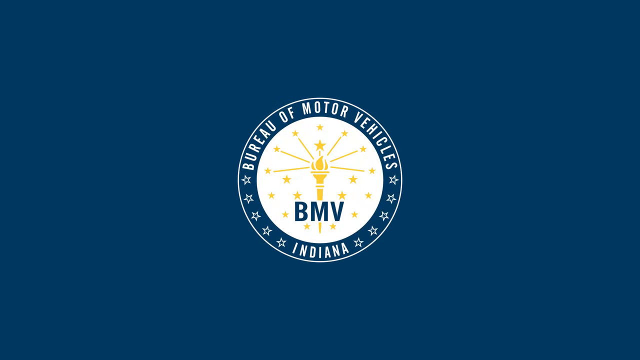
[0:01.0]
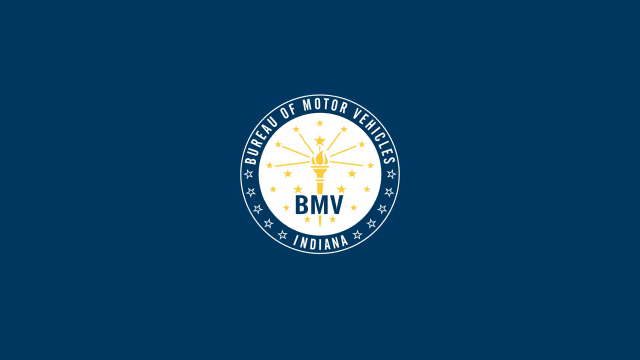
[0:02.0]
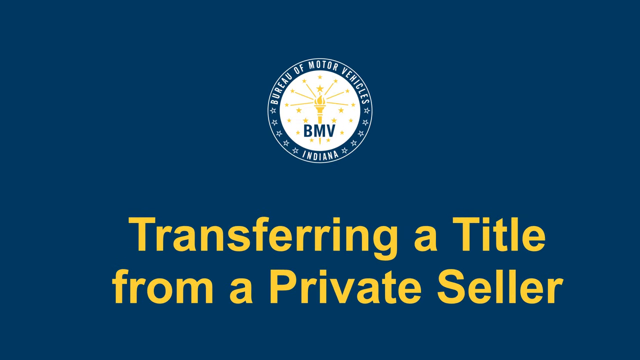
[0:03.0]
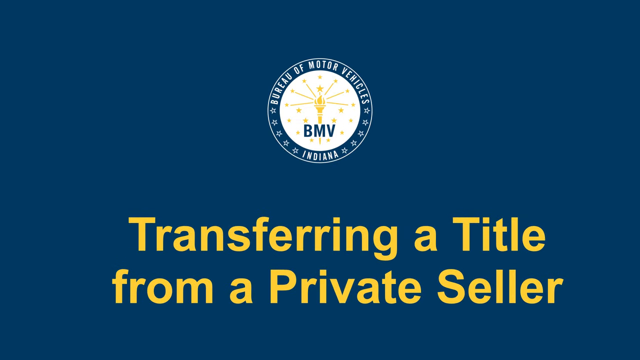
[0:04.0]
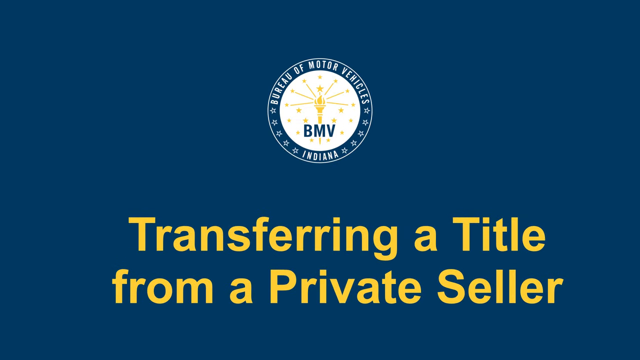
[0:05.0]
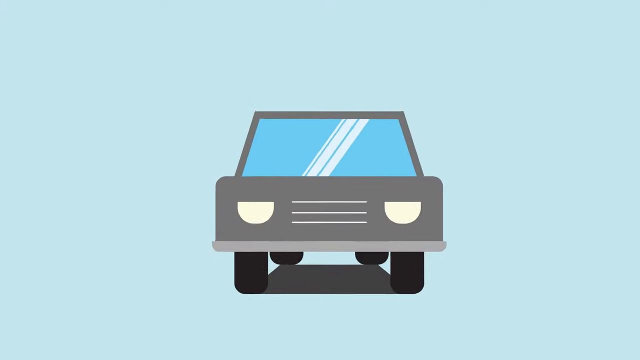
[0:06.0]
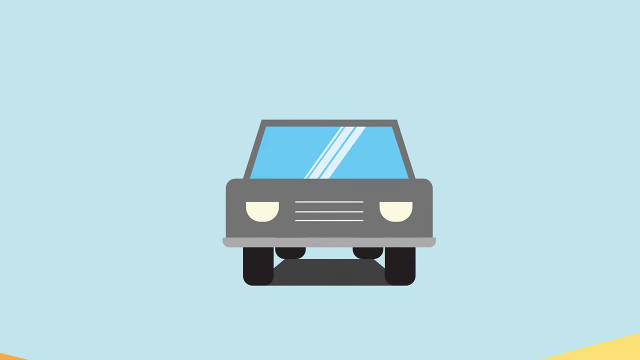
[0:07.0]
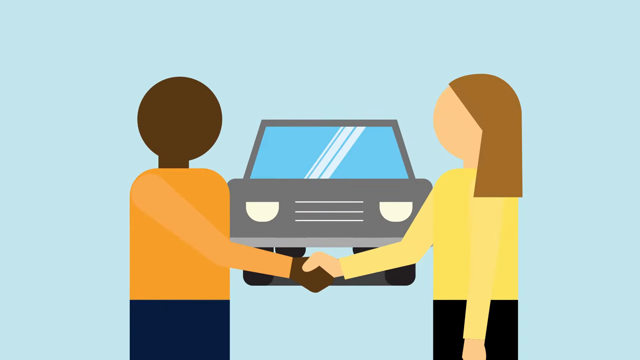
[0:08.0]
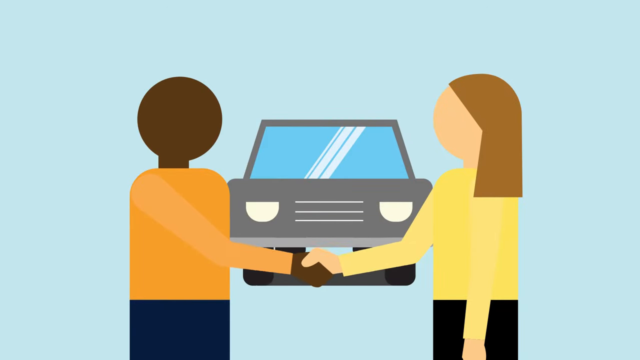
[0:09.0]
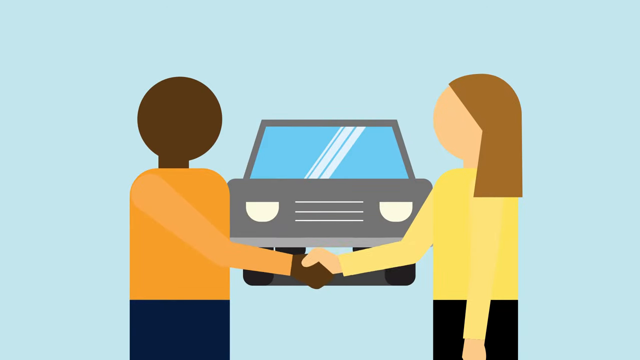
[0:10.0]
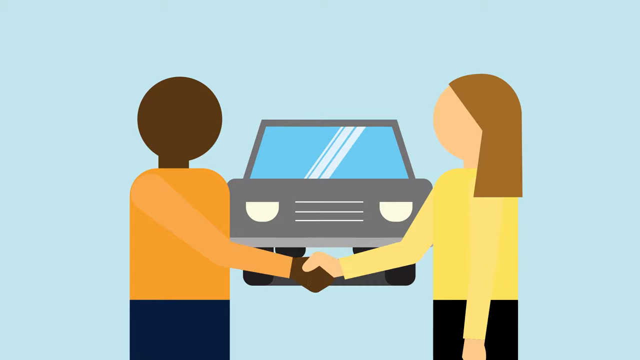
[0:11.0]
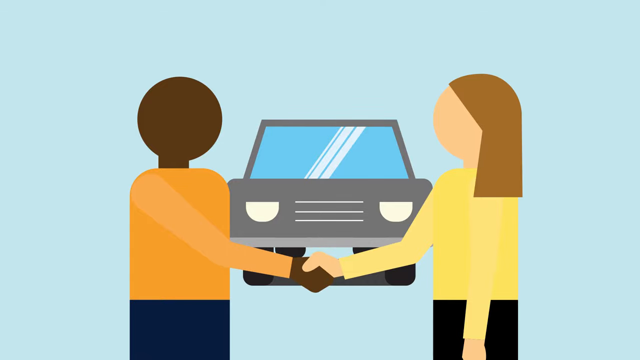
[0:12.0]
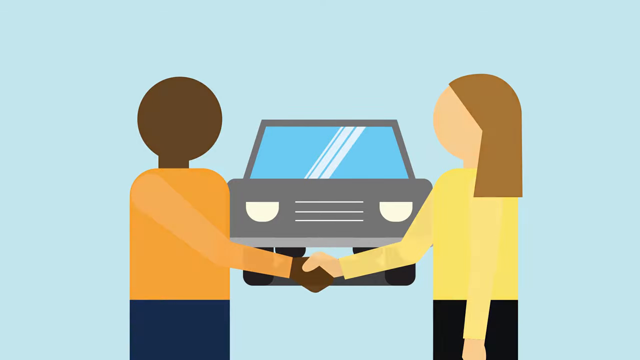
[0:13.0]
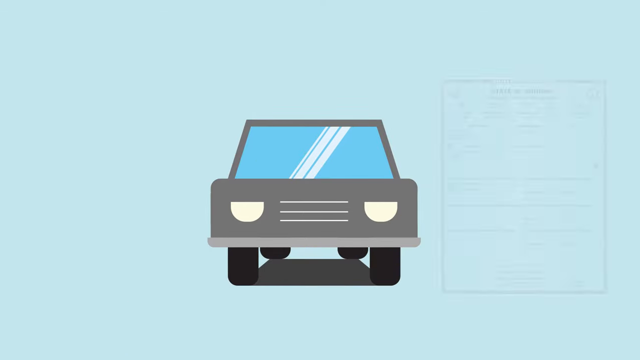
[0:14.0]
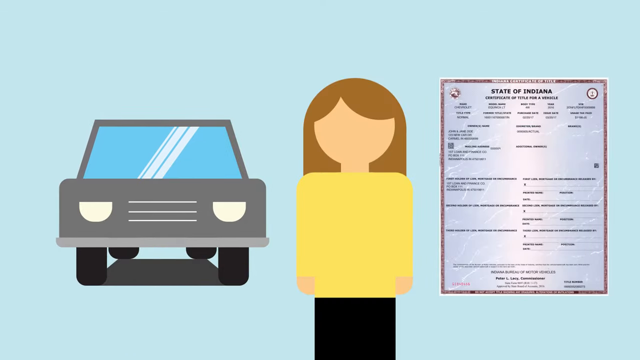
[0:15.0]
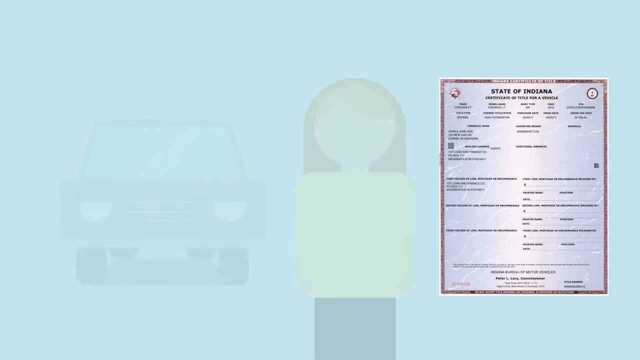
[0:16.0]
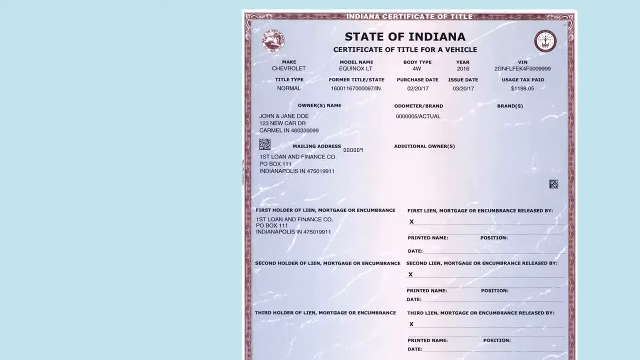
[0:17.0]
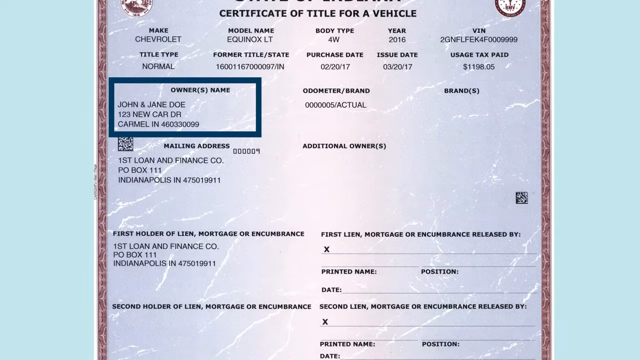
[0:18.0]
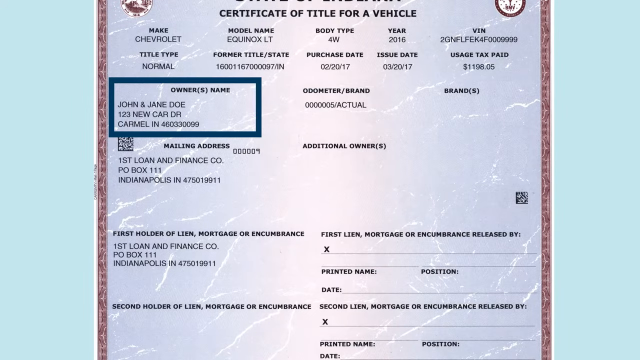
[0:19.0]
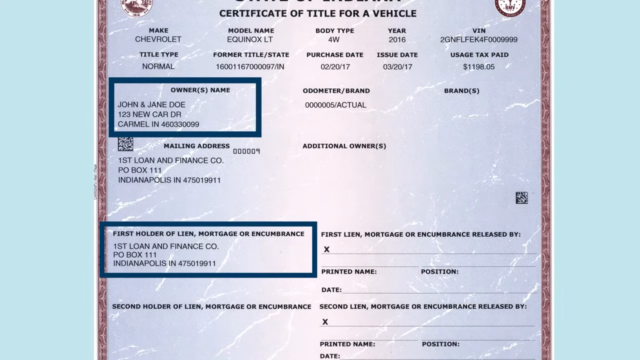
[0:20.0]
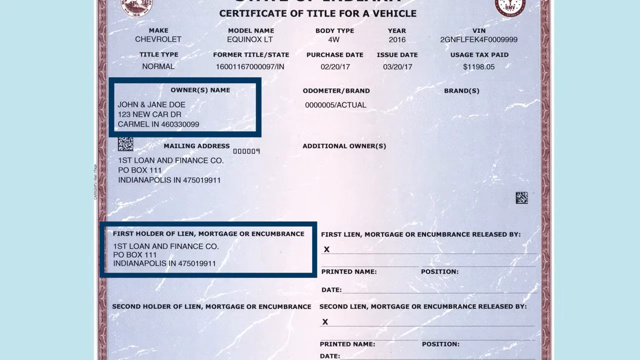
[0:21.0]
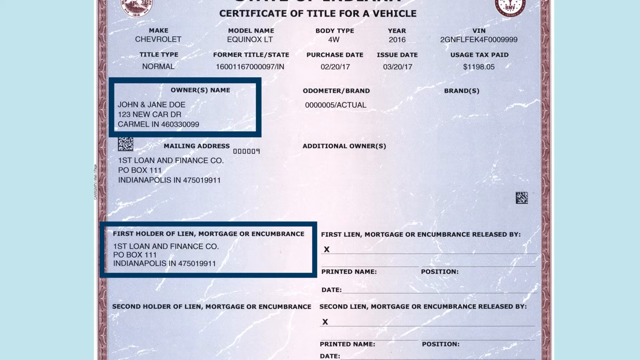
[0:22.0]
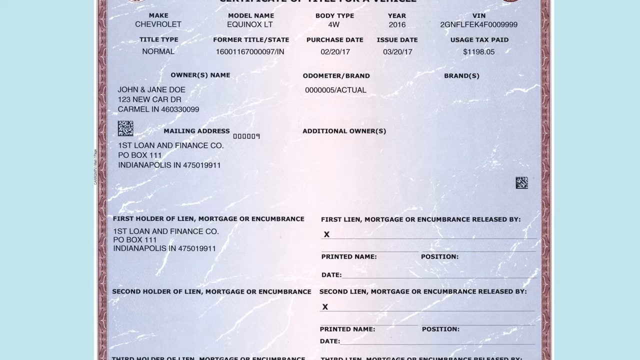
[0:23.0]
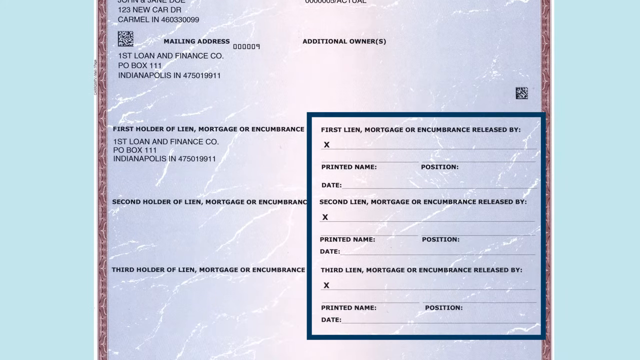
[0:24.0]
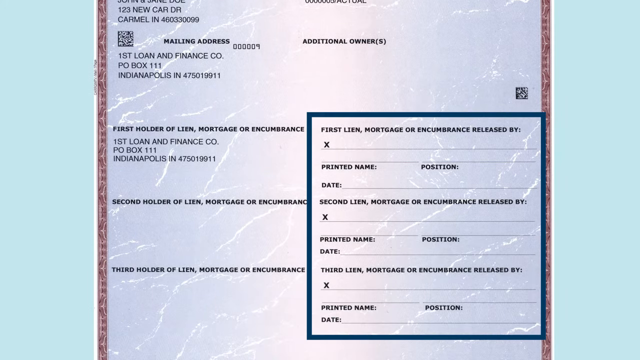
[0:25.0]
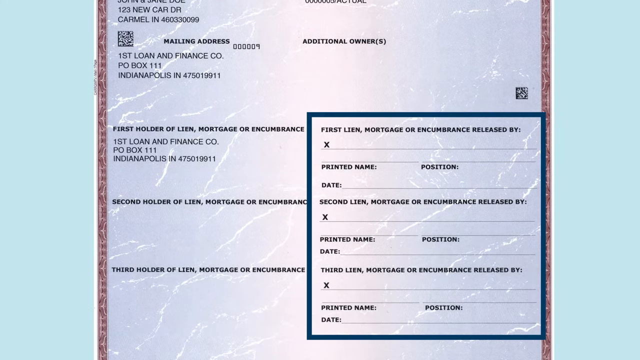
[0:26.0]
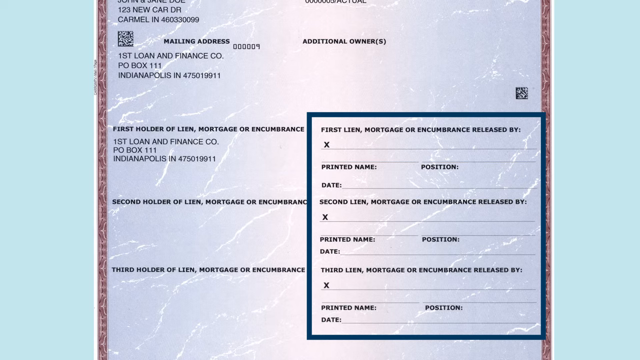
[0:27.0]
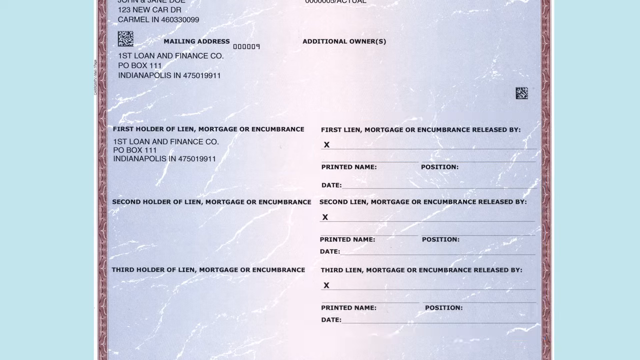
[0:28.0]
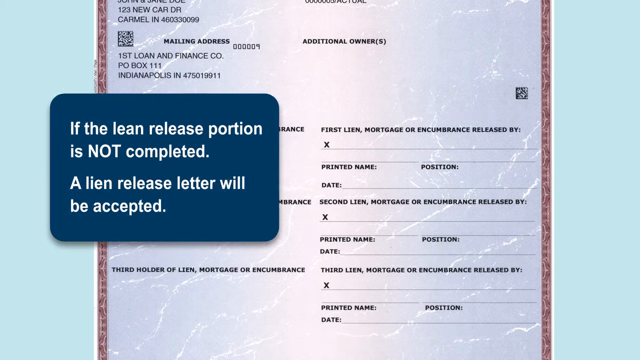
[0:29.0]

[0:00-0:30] A royal blue screen appears with a round emblem in the middle: the emblem of the Bureau of Motor Vehicles of Indiana. It is blue on the outer edges and white on the inside, and the letters BMV are written in blue. The screen moves up, the logo moves up, and the words "transferring a title from a private seller" enter the screen beneath it in yellow. A cartoon image of a gray vehicle appears, facing the viewer. A man and a woman then come on screen. The man, on the left, wears a golden yellow shirt and has his right arm extended out in front of him. The woman, on the right, wears a pale yellow shirt and has her left arm extended out in front of her. They shake each other's hand up and down. A certificate of title for a vehicle then pops up in the middle of the screen. The owner's names are outlined, and next the first holder of the lien is outlined. The view scrolls down, and an outline appears around the first lien, mortgage, or release date.